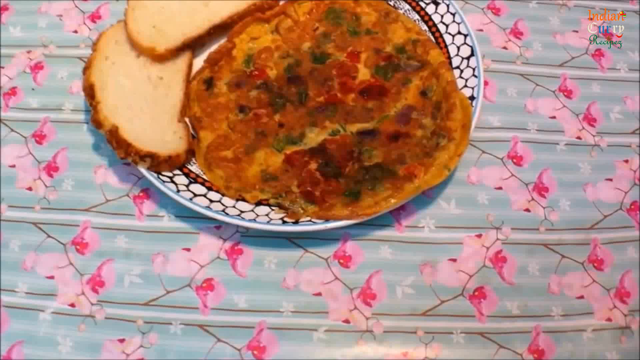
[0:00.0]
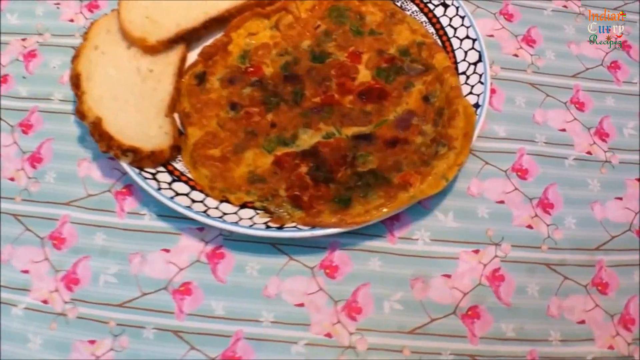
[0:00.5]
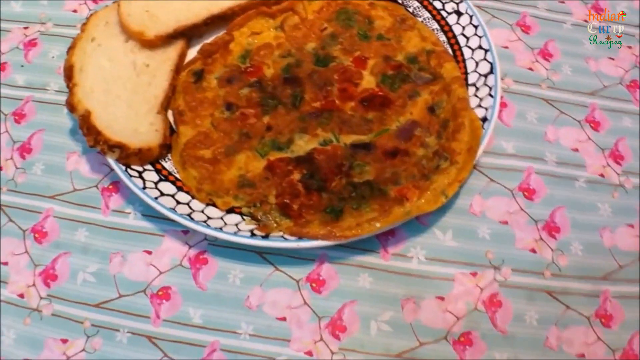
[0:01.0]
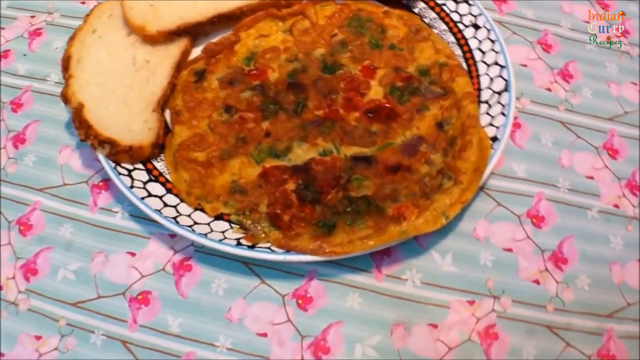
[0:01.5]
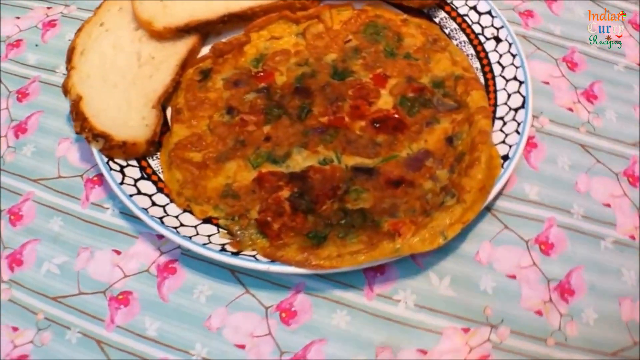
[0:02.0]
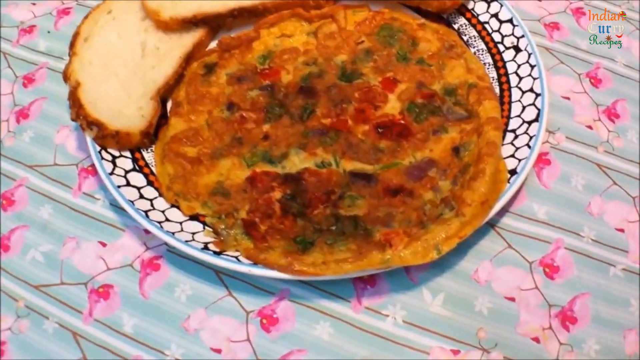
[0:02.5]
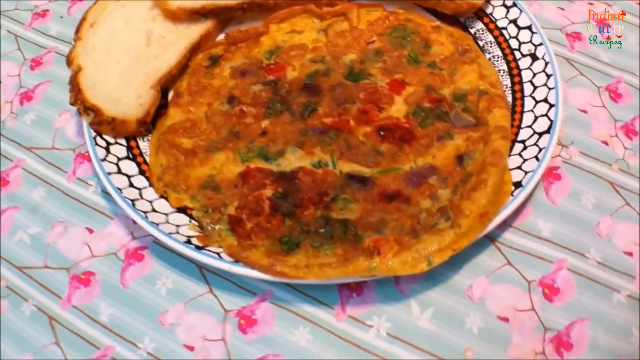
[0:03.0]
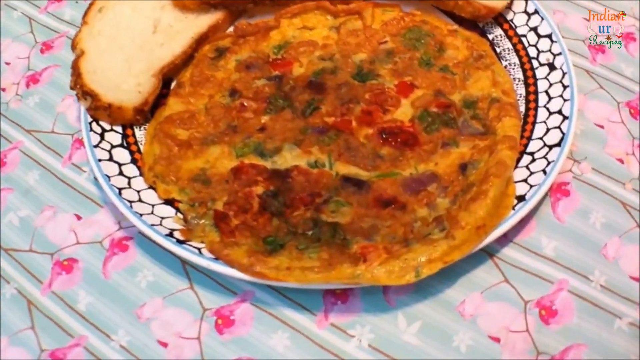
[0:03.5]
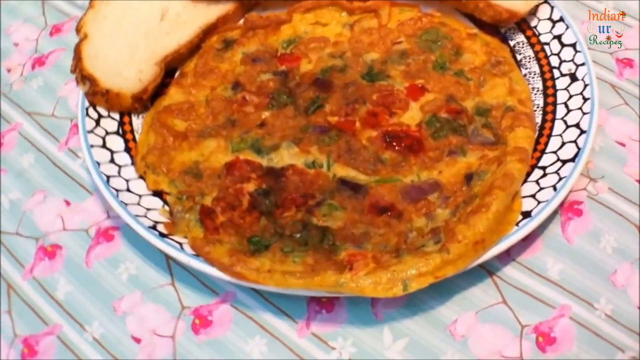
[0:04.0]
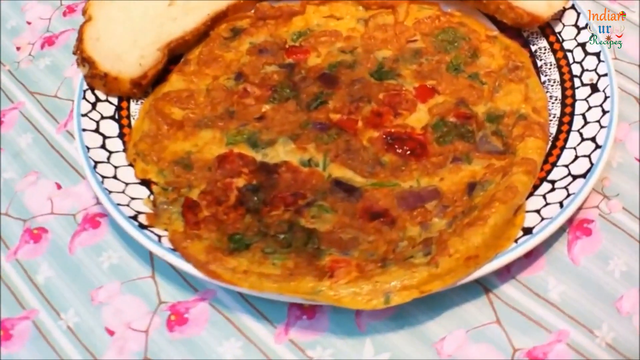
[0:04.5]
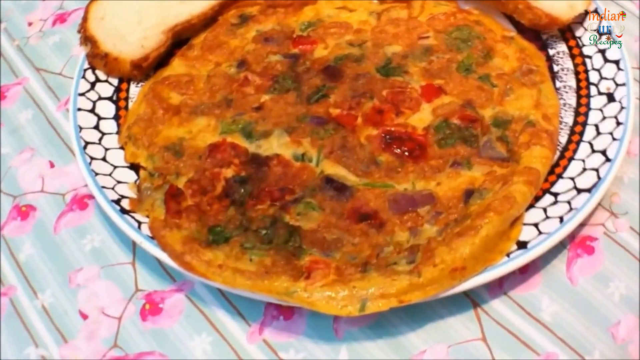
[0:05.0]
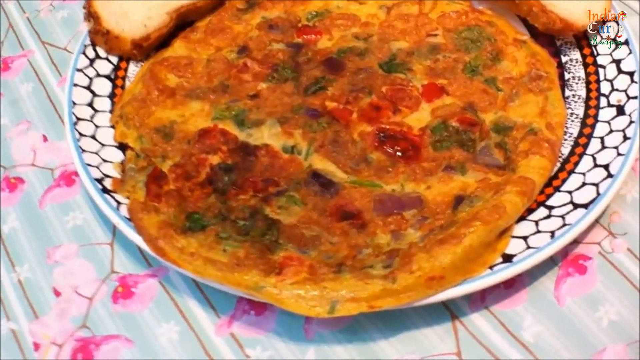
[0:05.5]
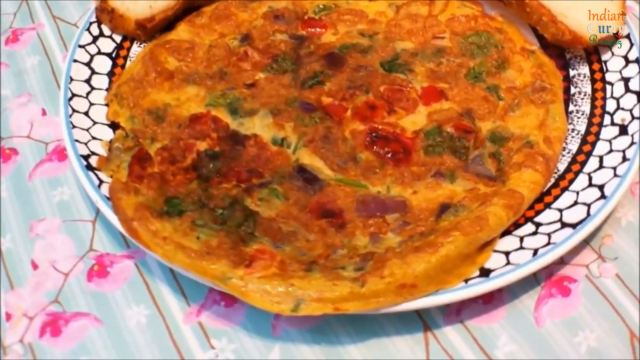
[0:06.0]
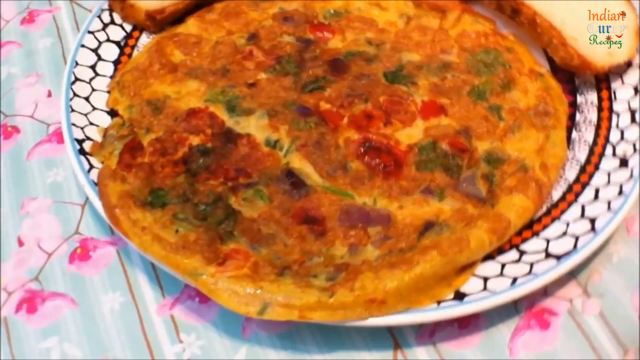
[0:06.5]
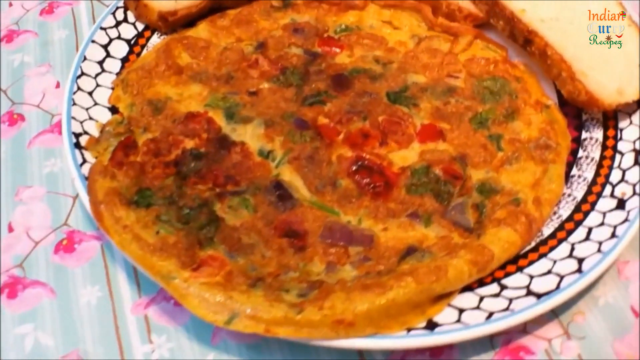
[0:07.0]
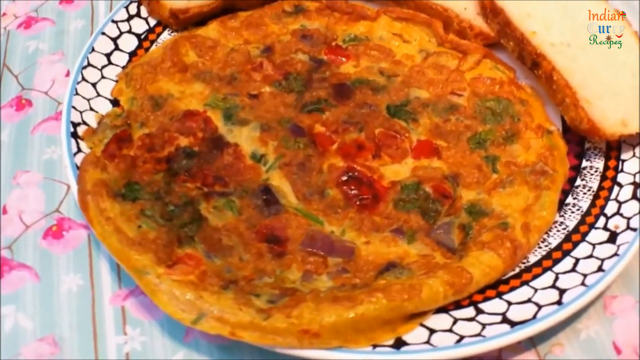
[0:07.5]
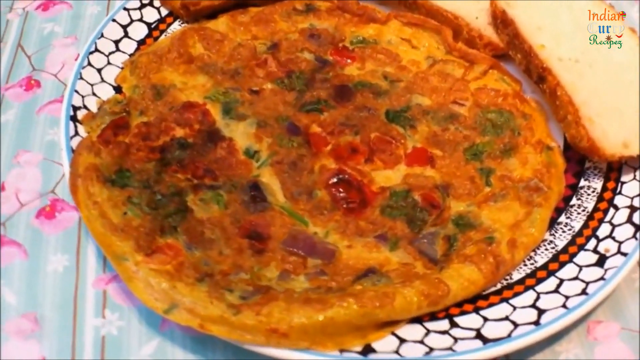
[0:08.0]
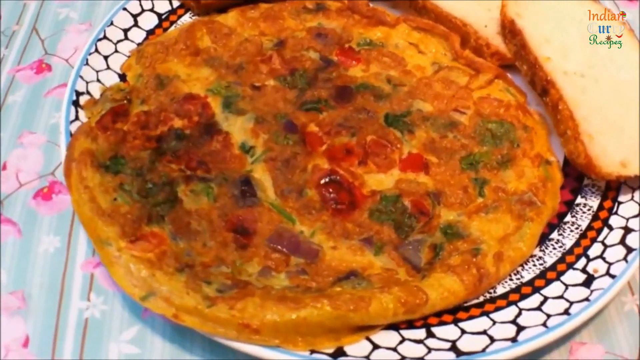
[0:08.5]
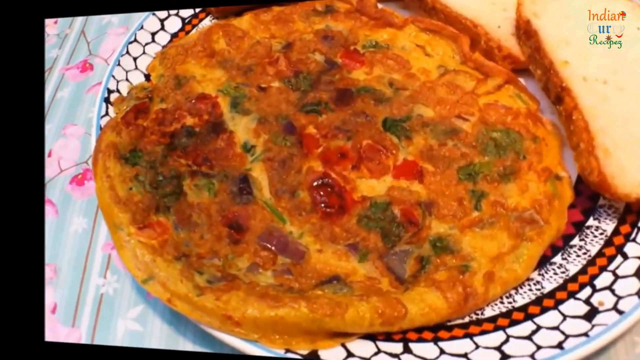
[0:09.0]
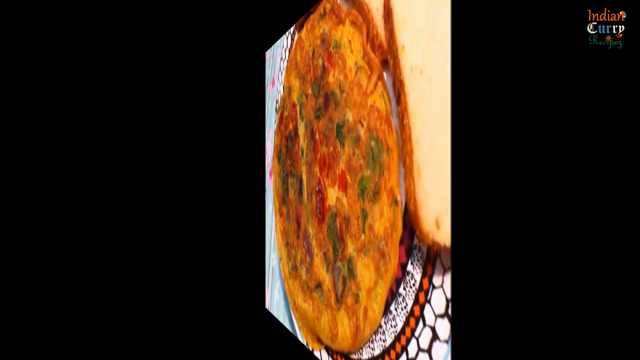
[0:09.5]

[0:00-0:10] The camera pans over what looks to be an egg omelette, apparently a masala omelette, on a plate on a table. The tablecloth has what looks like branches and flowers with some white petals, a pink, purplish and white colour, and some stripes. The plate has octagon patterns in a few different colours. A very large omelette is in the center of the plate, and on the sides are what look to be three slices of bread right next to the omelette, touching it. The scene then does a flip transition to egg yolk inside a white bowl and a hand holding a fork, seemingly about to start stirring the egg. Text in the upper right corner apparently reads "Indian curry recipes", and text at the bottom right reads "Subscribe channel now", with an unclear symbol underneath that might be a pepper. The shot shows what the omelette looks like when finished.